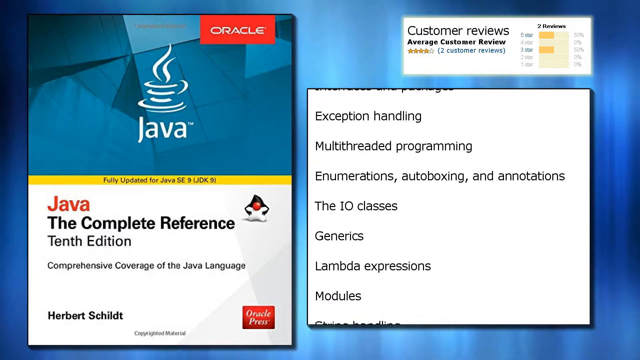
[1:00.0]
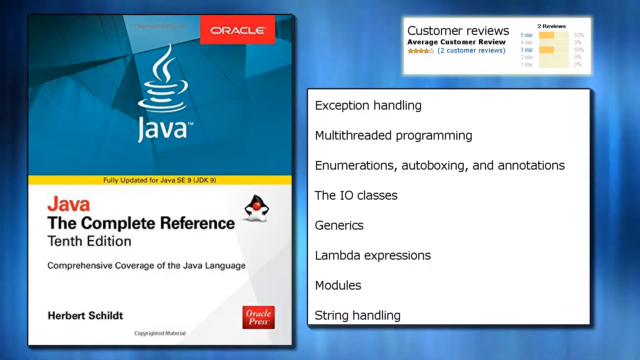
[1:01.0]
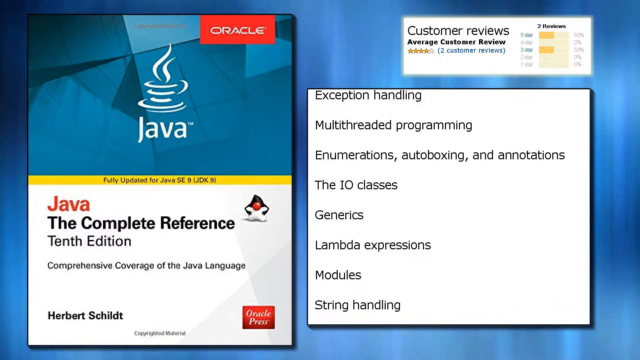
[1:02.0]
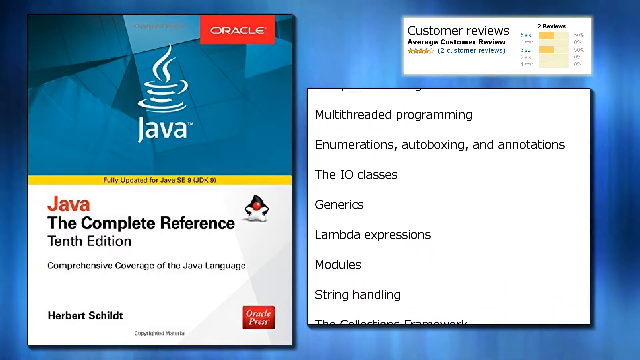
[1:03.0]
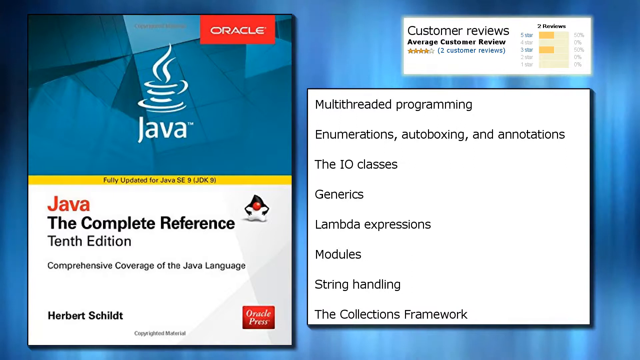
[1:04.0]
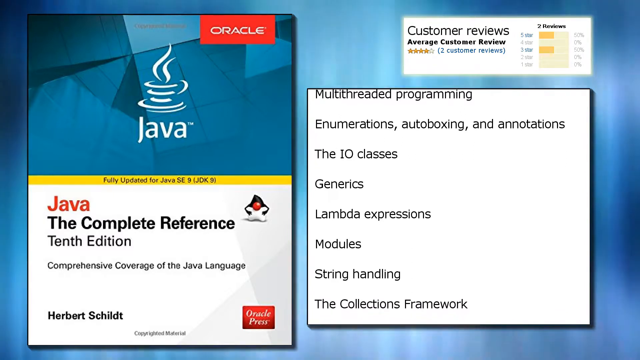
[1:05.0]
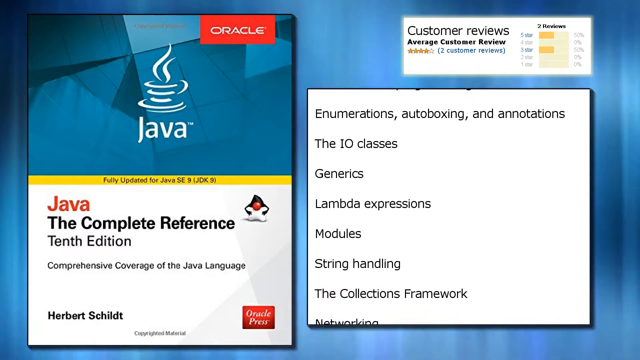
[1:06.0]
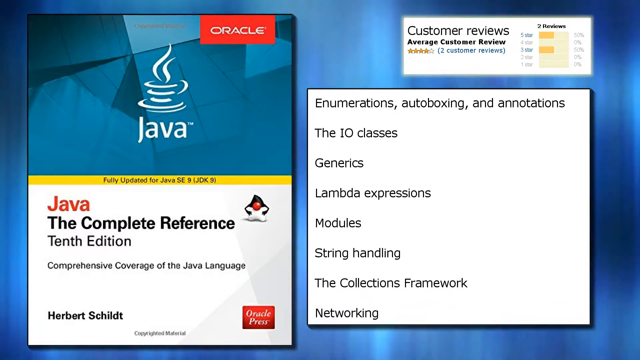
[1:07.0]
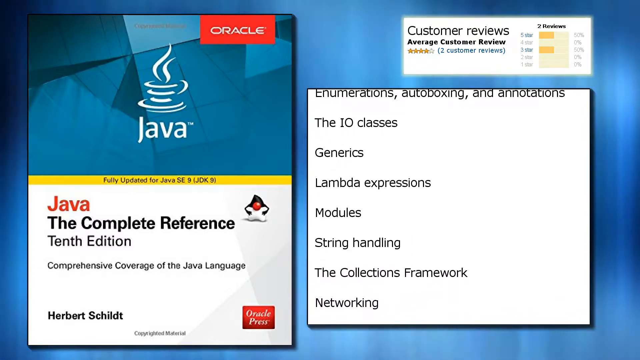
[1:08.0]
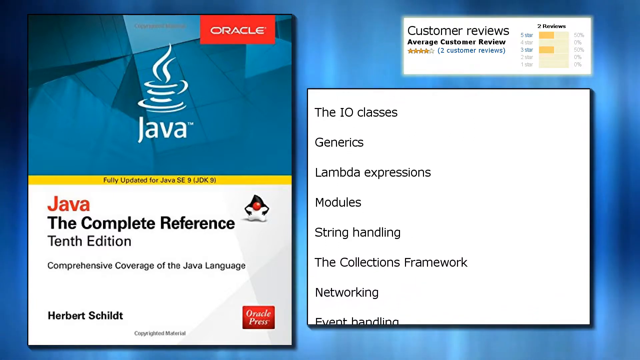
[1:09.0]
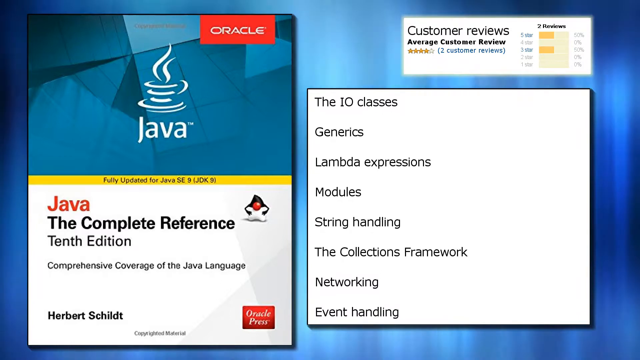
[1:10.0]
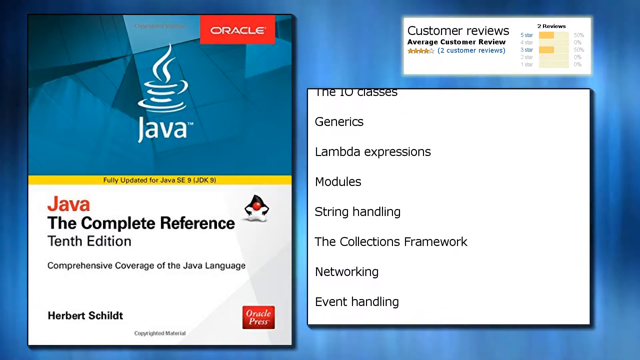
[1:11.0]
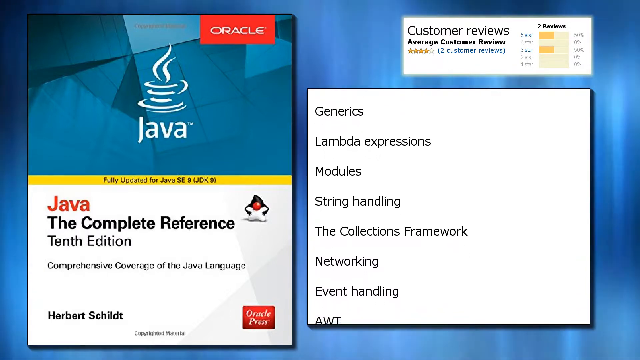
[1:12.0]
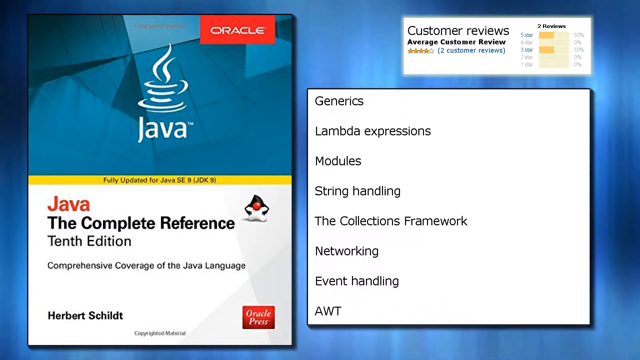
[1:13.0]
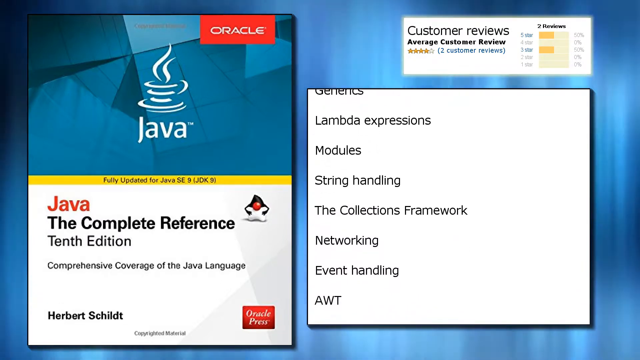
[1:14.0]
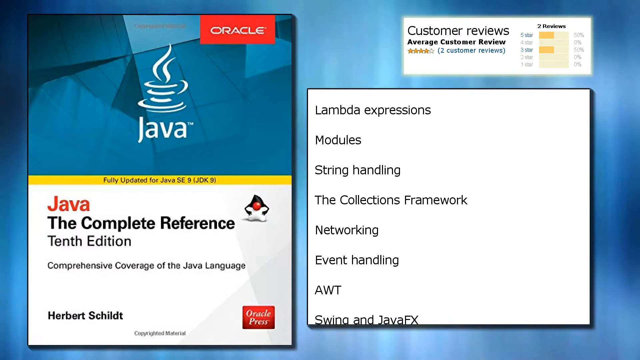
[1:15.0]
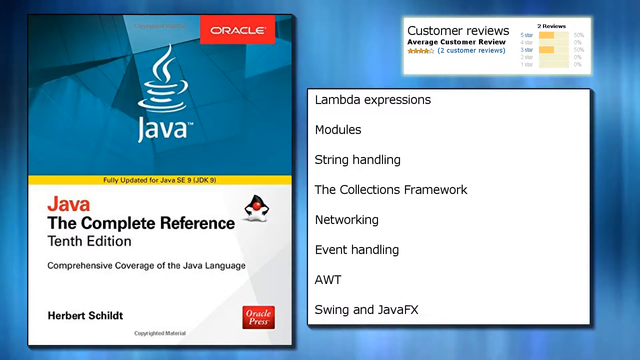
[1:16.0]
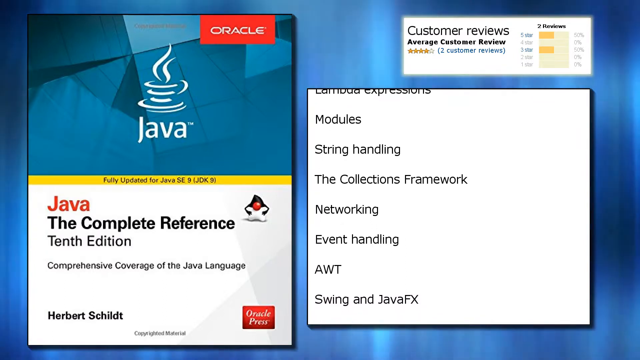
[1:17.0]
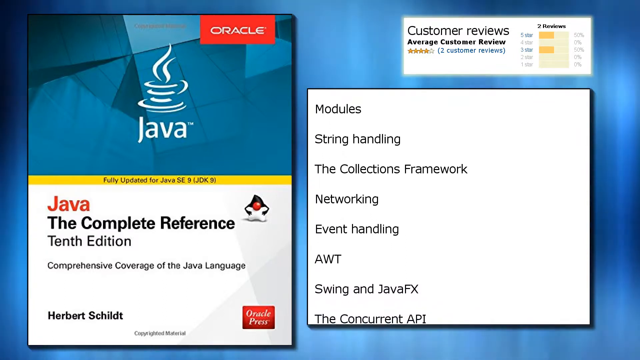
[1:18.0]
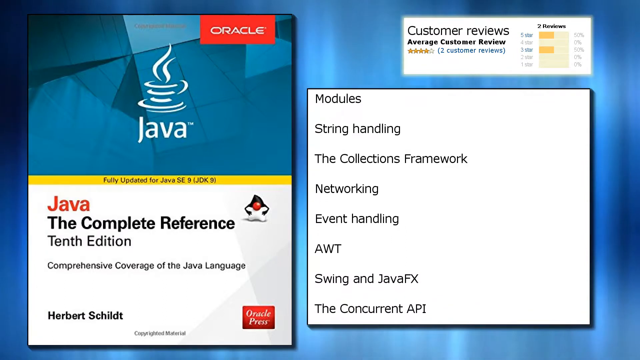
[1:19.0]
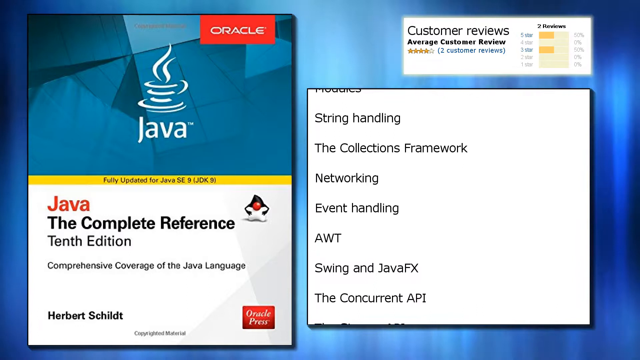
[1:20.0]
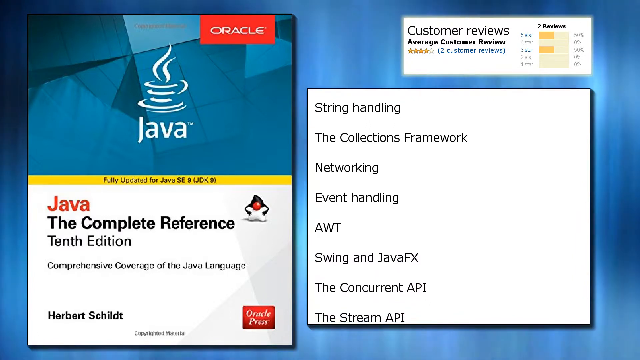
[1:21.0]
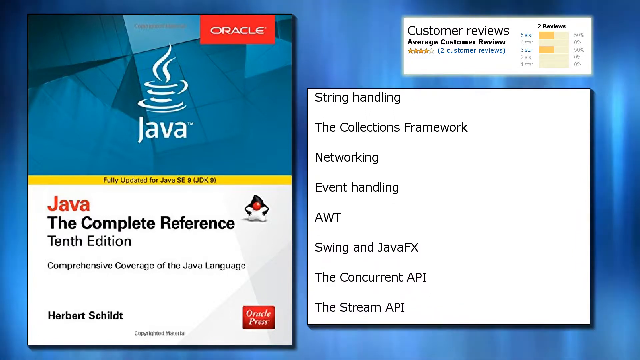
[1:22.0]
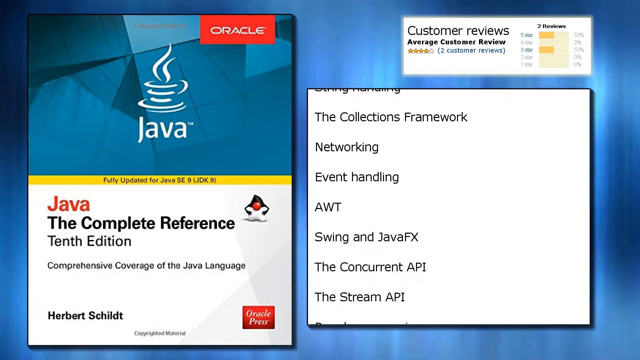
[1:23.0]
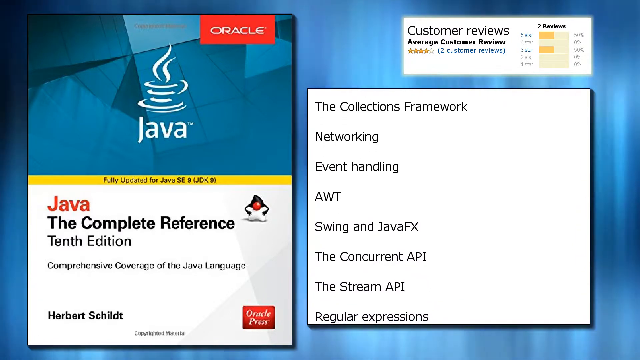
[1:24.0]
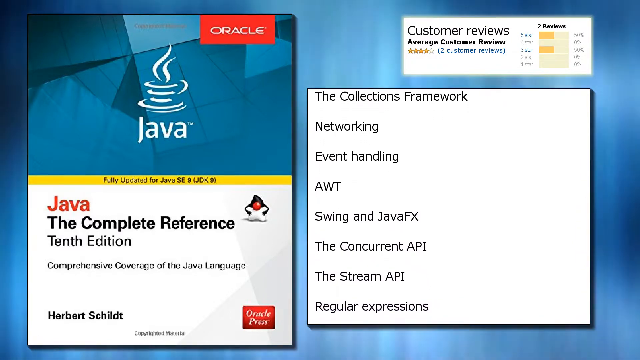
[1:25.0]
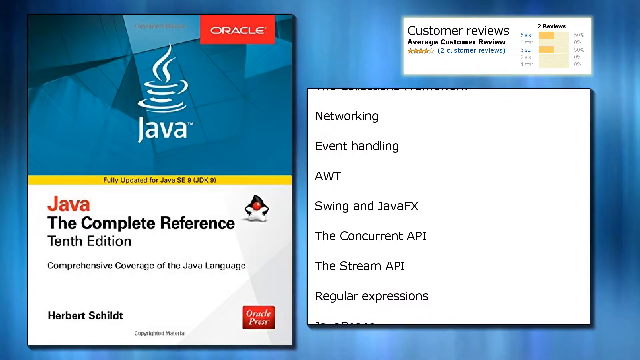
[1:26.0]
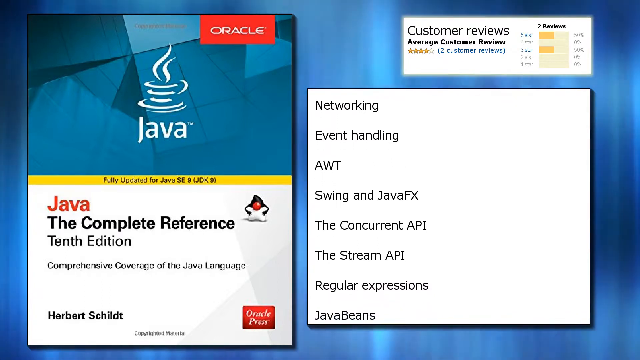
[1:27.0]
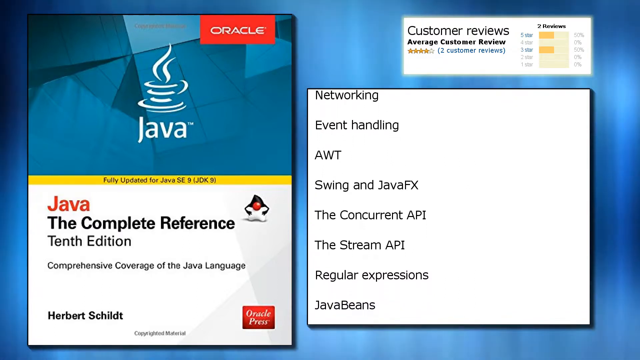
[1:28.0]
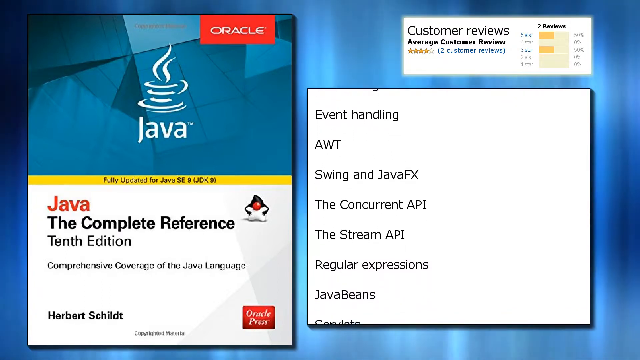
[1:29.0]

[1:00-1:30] The Aurora-like background graphics keep moving behind the information scrolling in the bottom right. More items are listed as the text scrolls, such as event handling, networking, Swing and JavaFX, the stream API, regular expressions, and Java beans, and finally servlets appears at the very bottom of the list. The information scrolls down at a consistent rate. The Java 10th edition book on the left and the customer reviews at the top right stay in place with no movement; the only movement is the background and the text scrolling in the white box on the right side of the screen.